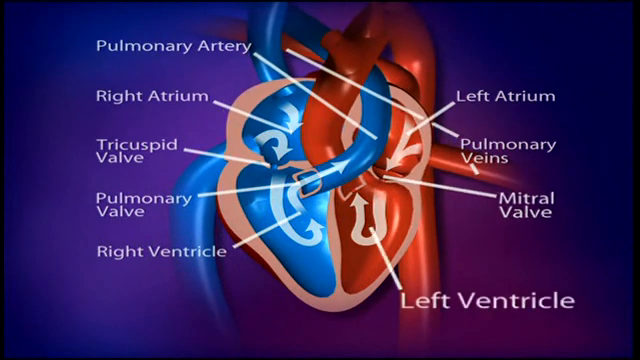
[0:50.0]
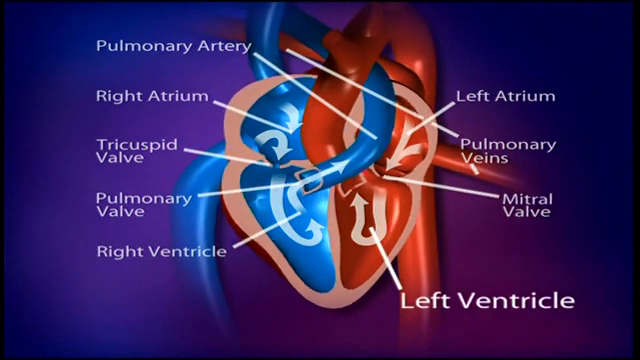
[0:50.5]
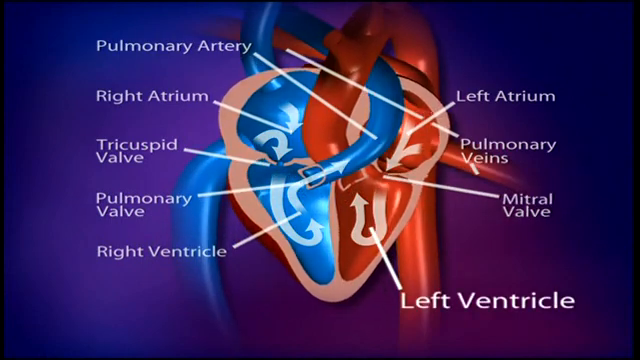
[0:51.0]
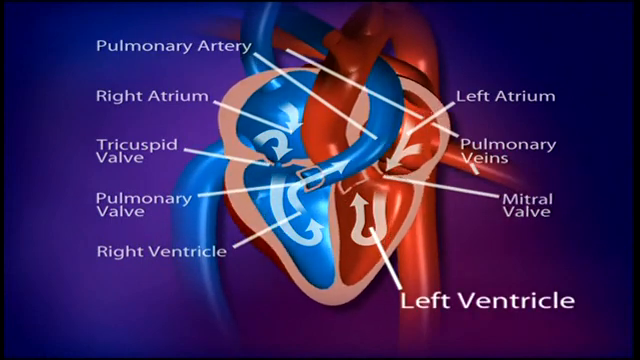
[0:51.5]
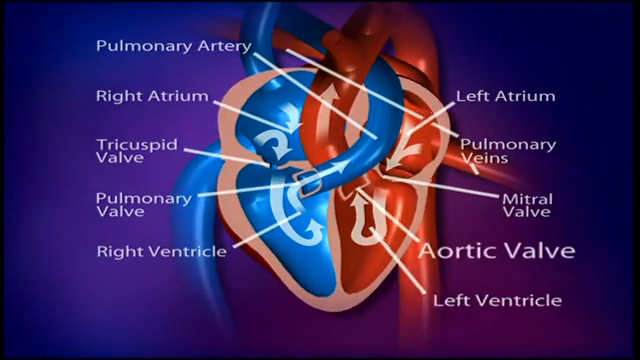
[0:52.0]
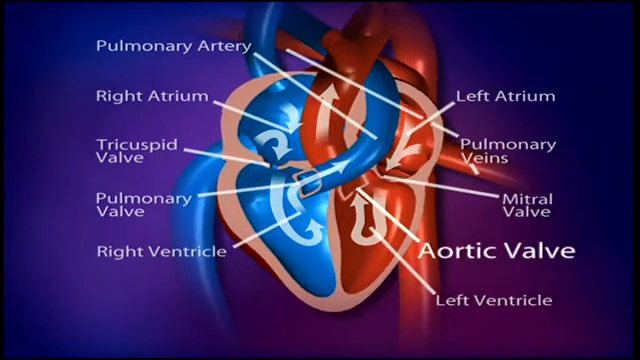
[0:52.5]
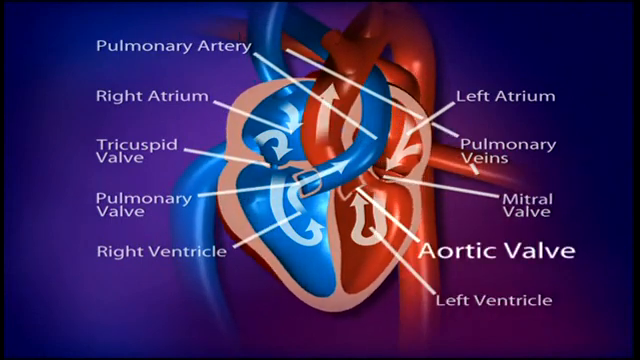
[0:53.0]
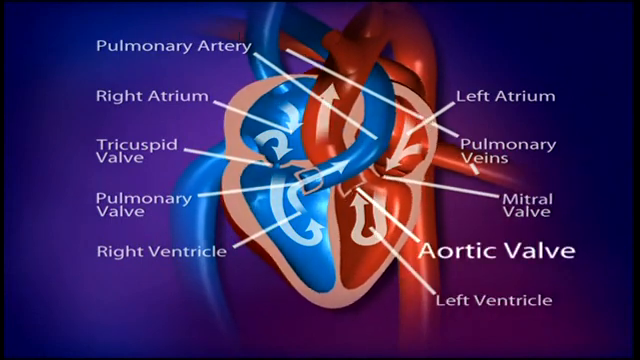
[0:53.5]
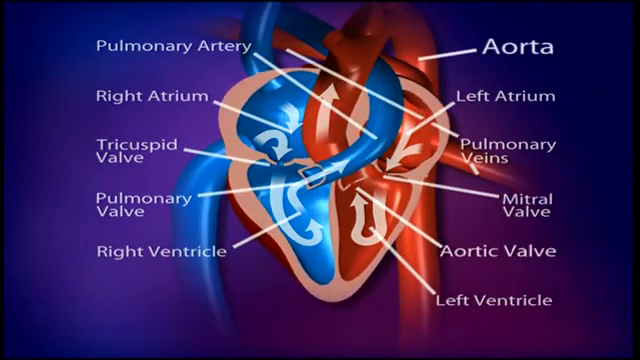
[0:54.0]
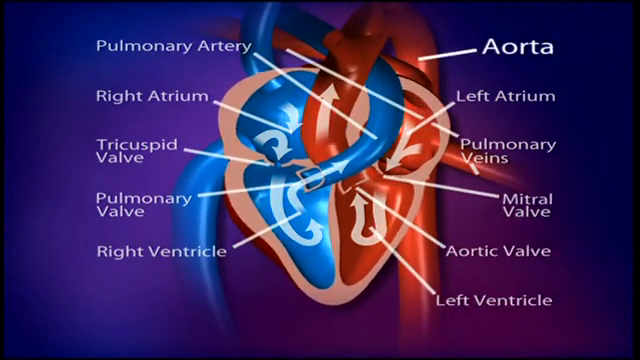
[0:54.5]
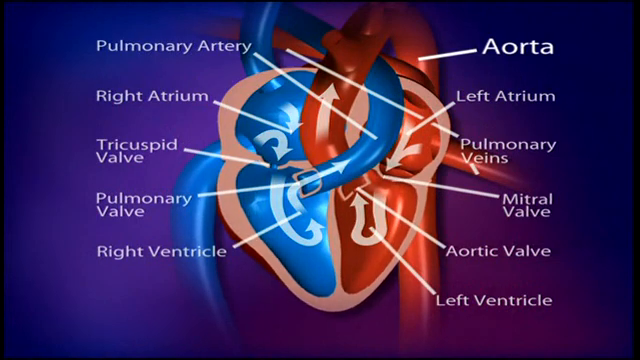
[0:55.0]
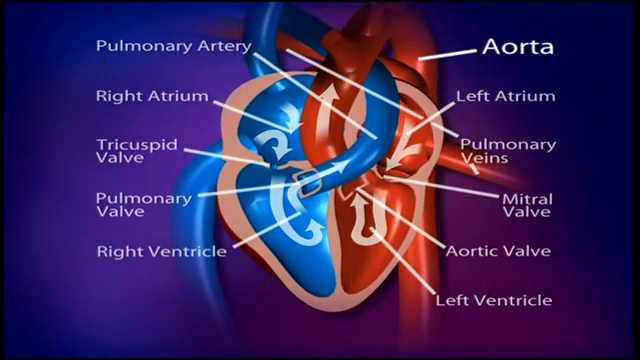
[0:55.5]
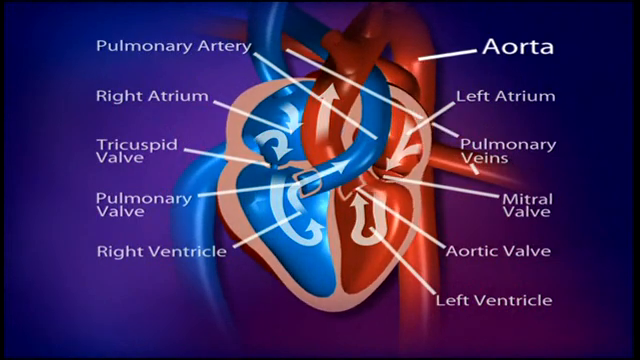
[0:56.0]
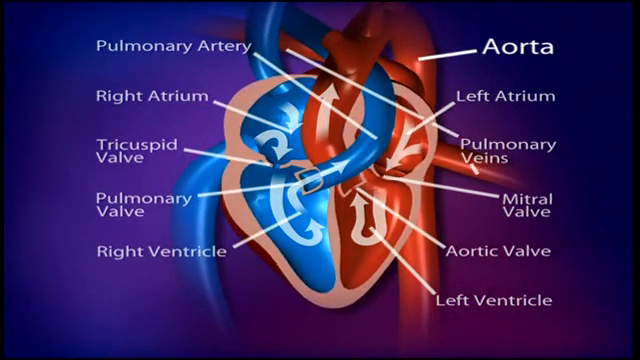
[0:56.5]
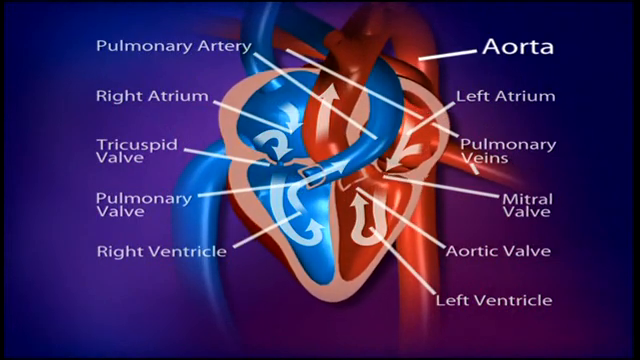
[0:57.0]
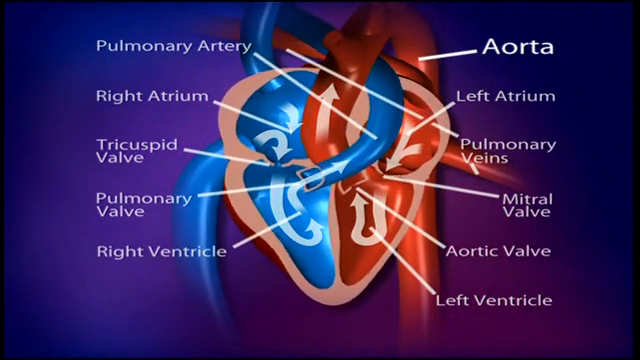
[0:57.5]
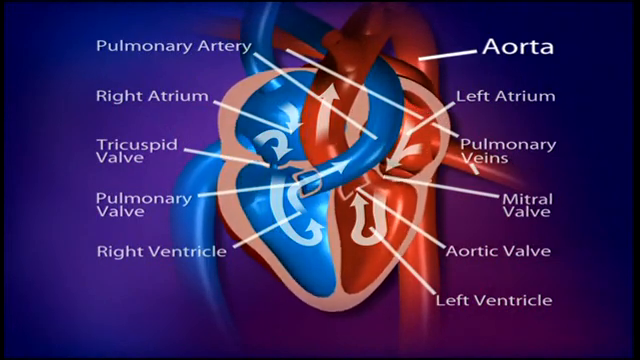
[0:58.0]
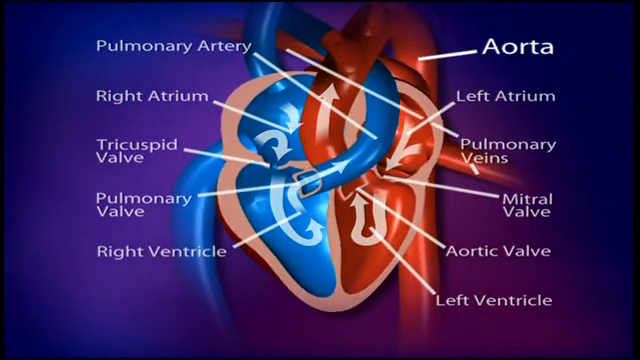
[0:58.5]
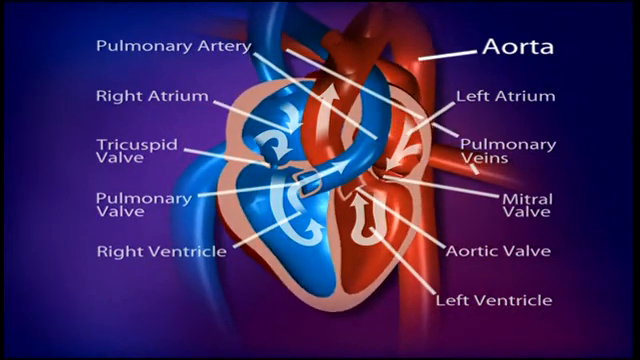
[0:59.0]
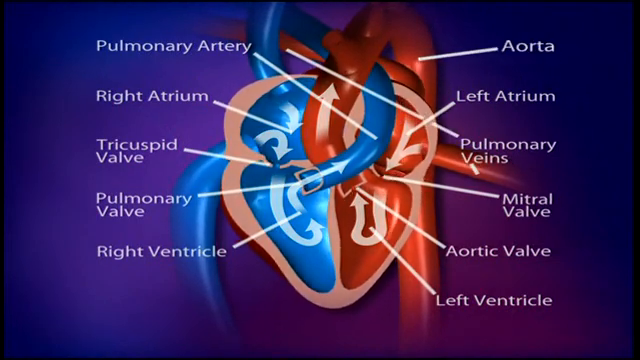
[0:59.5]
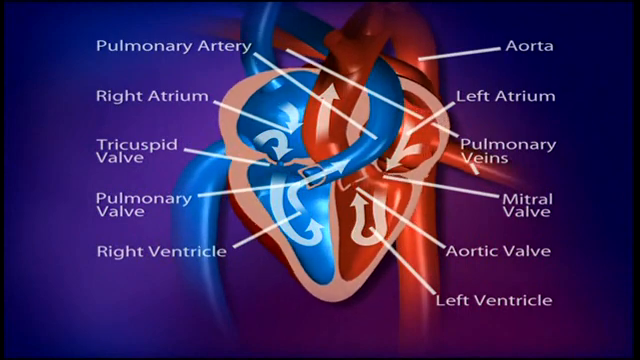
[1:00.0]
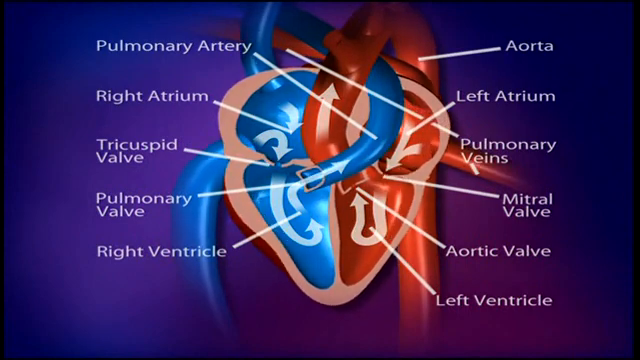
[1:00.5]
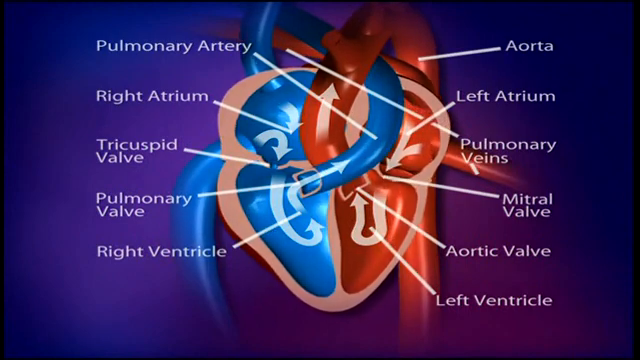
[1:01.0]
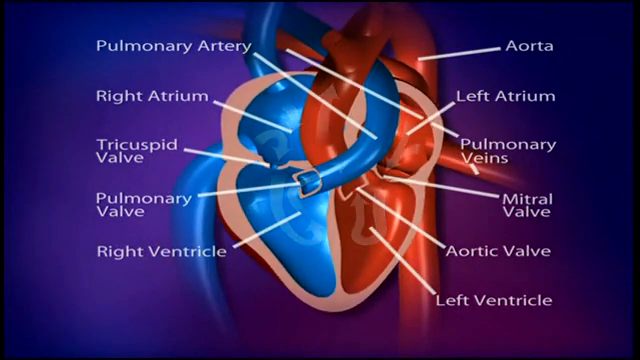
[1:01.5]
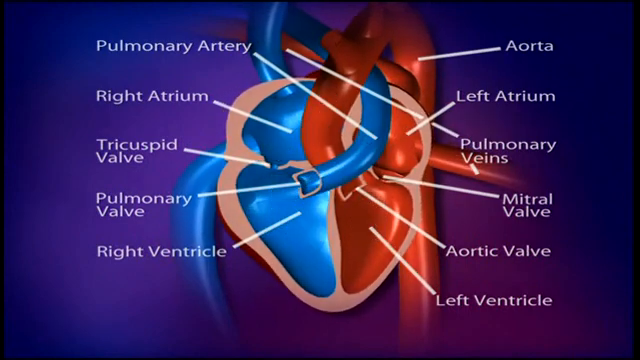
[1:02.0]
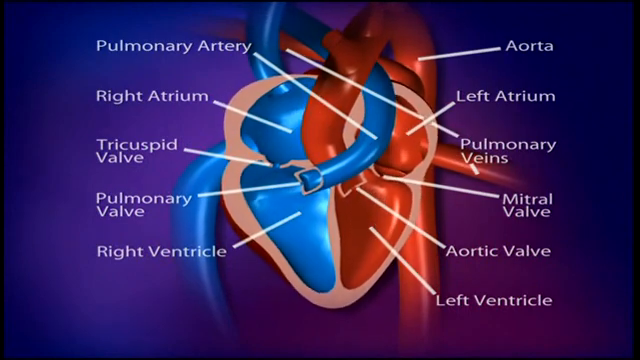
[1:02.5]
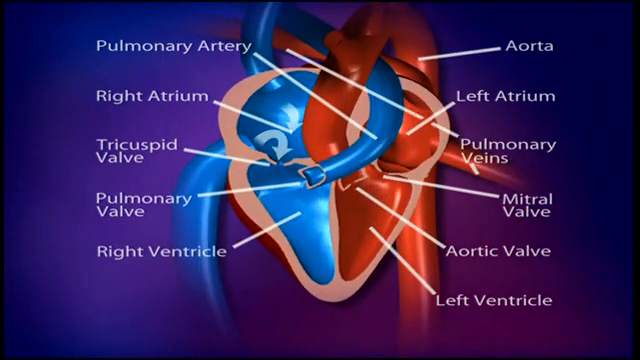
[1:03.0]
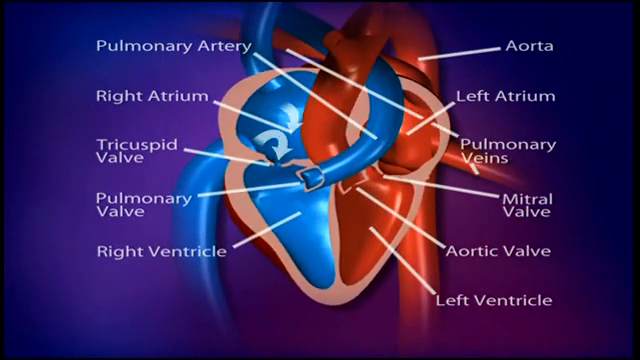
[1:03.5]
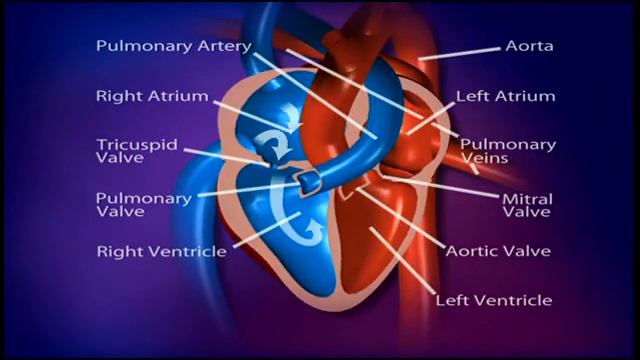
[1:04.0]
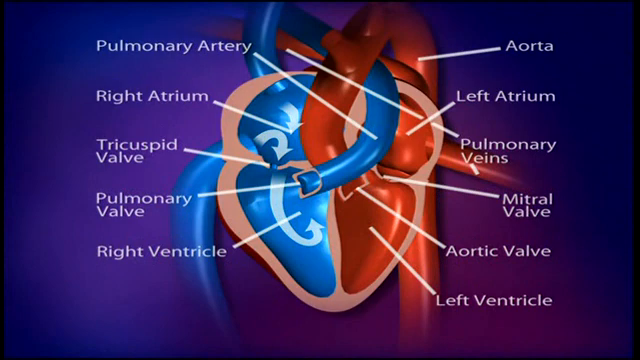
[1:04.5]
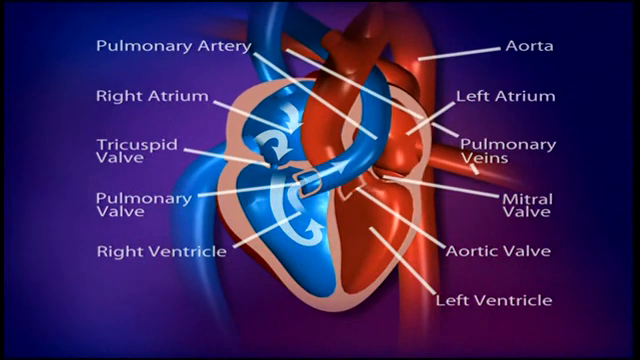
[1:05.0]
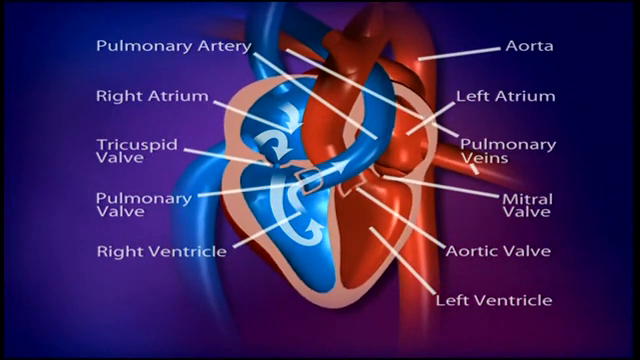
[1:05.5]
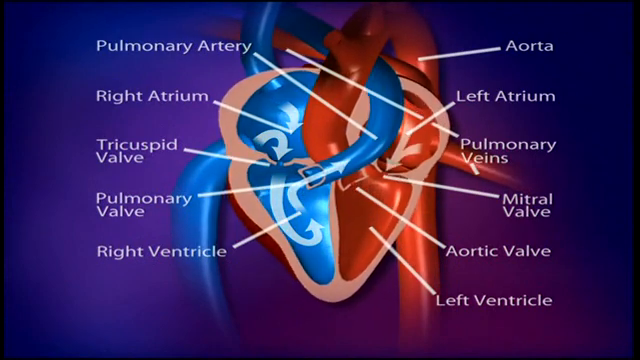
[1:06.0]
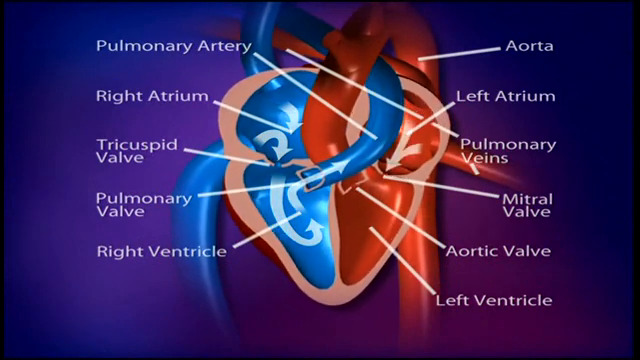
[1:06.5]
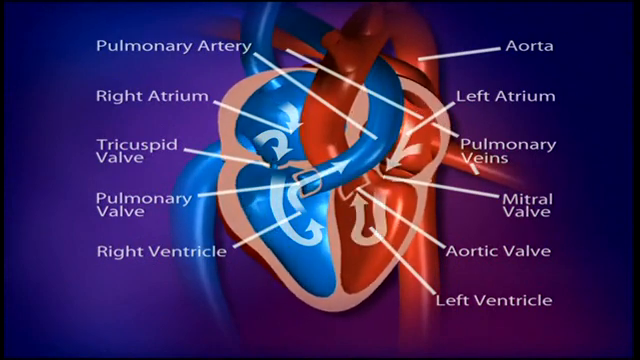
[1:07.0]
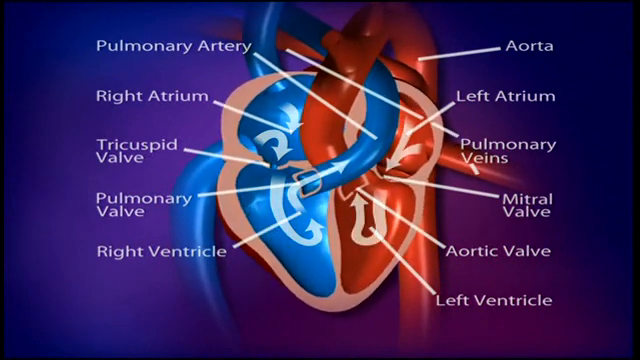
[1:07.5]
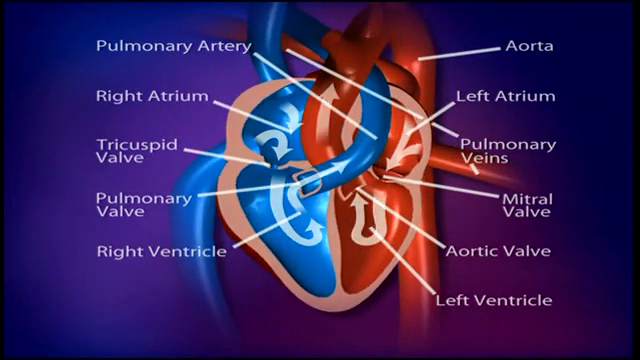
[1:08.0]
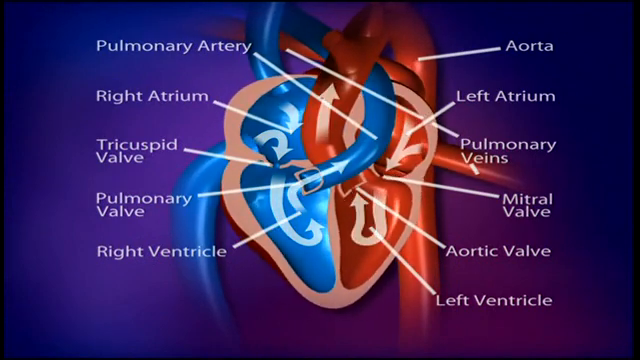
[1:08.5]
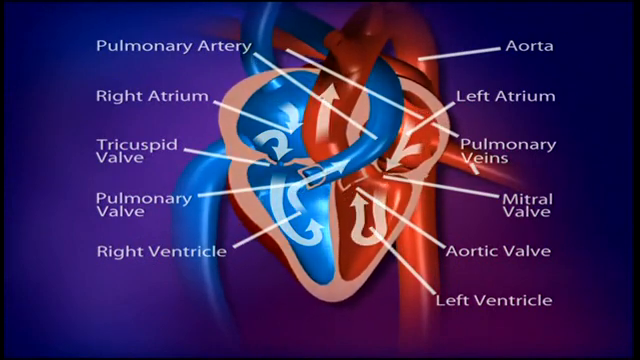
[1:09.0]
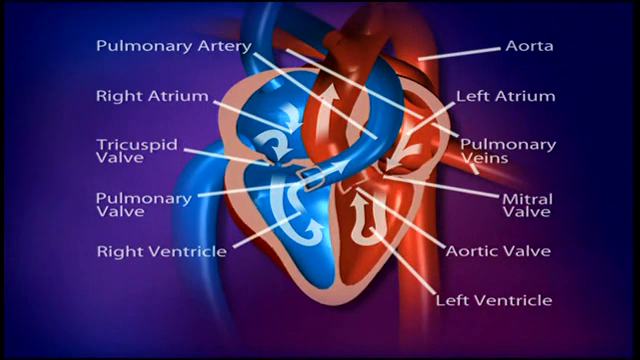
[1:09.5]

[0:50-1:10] The heart has its areas labeled, and two more parts are pointed out: the septum and the pulmonary veins. The heart continues to beat and move, and the connected pieces and parts move with it. Half of the heart is blue and the other half is red.